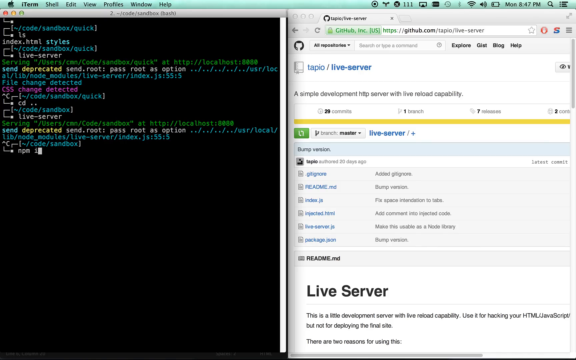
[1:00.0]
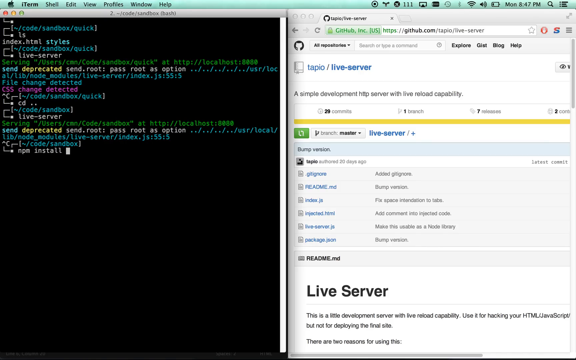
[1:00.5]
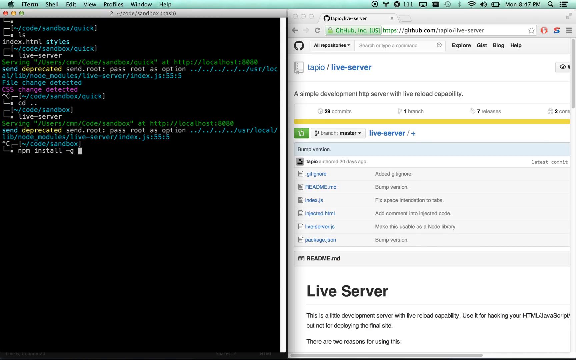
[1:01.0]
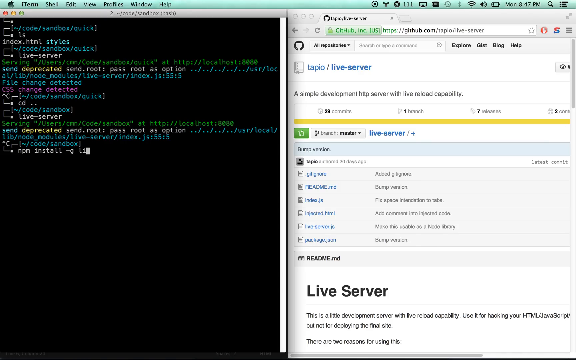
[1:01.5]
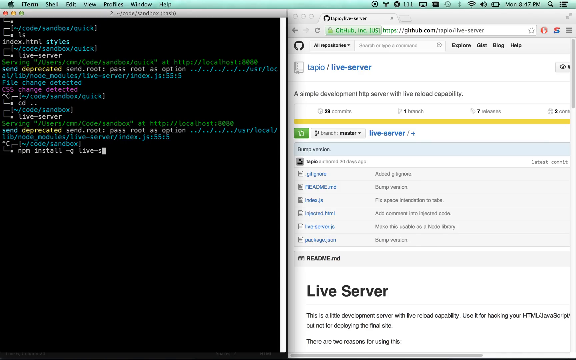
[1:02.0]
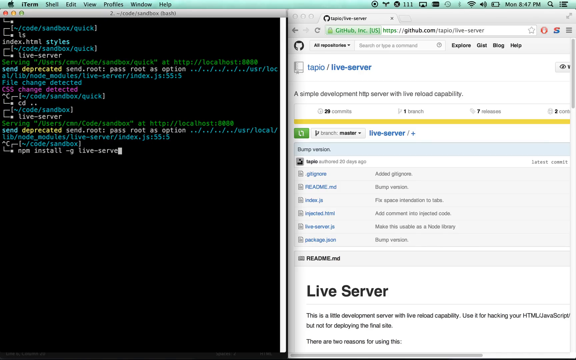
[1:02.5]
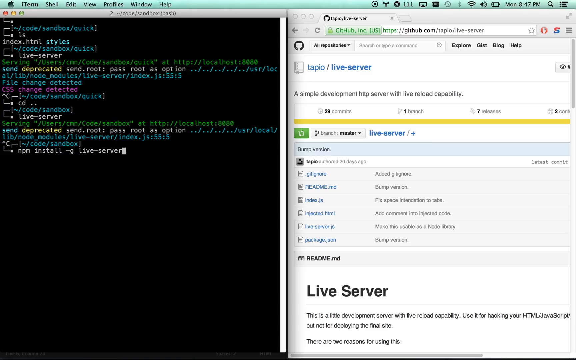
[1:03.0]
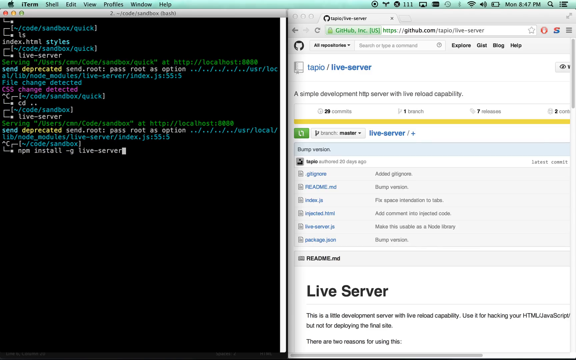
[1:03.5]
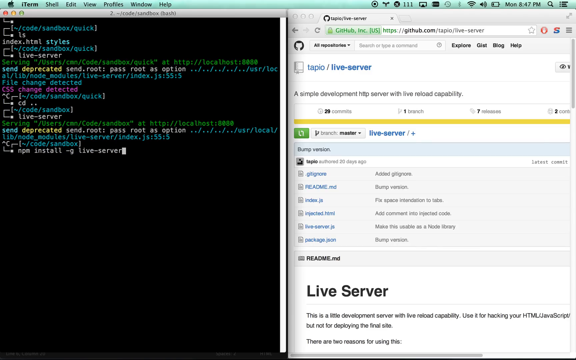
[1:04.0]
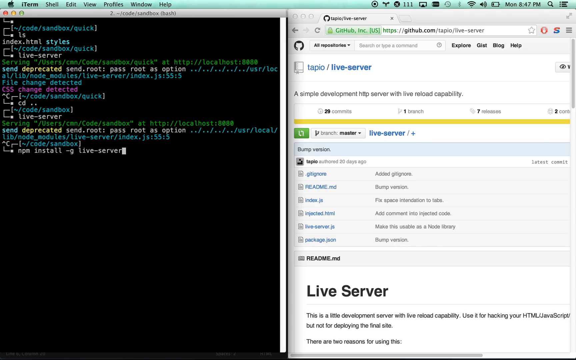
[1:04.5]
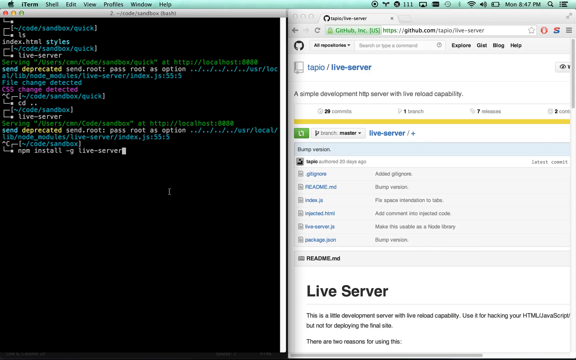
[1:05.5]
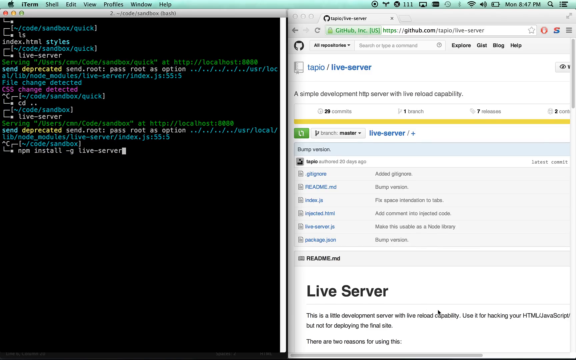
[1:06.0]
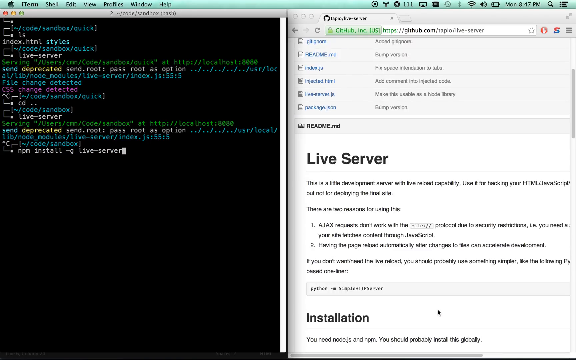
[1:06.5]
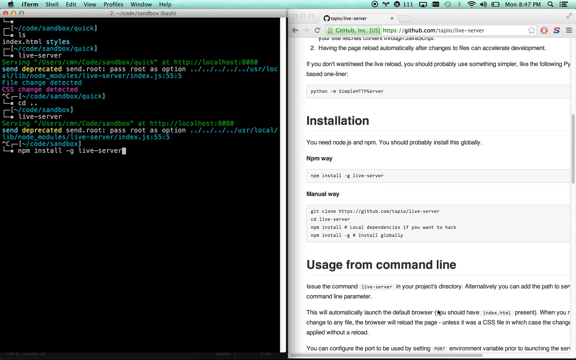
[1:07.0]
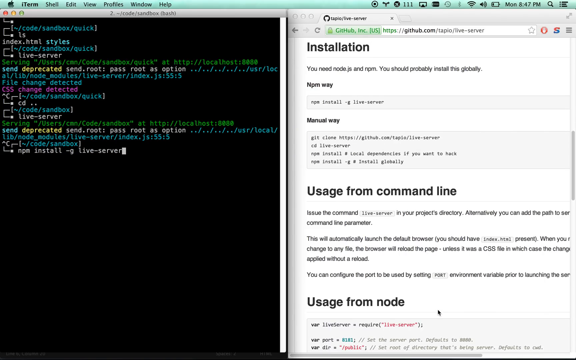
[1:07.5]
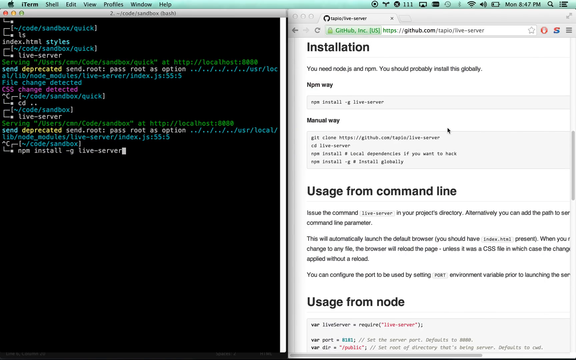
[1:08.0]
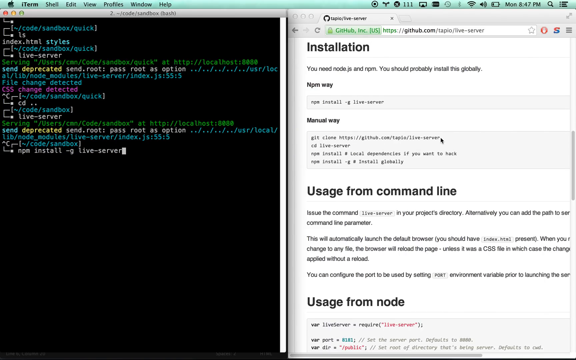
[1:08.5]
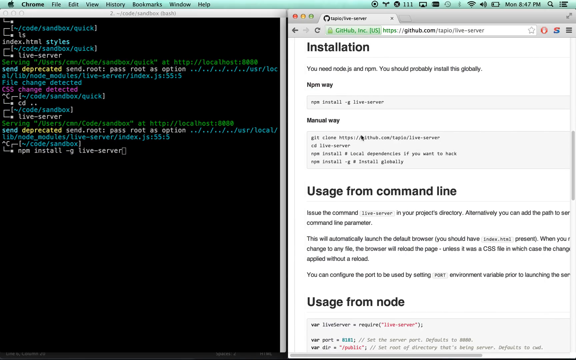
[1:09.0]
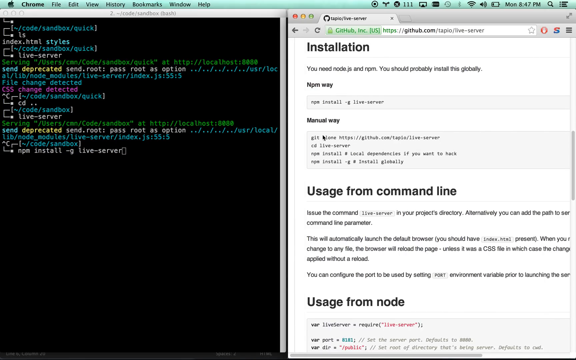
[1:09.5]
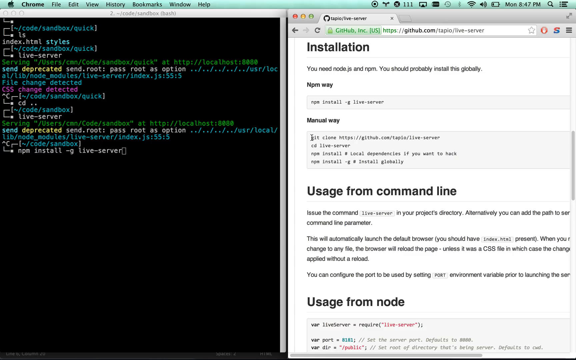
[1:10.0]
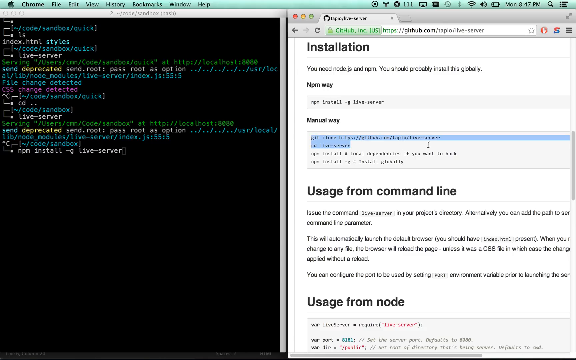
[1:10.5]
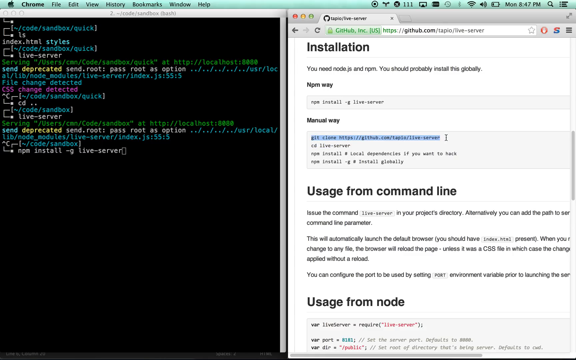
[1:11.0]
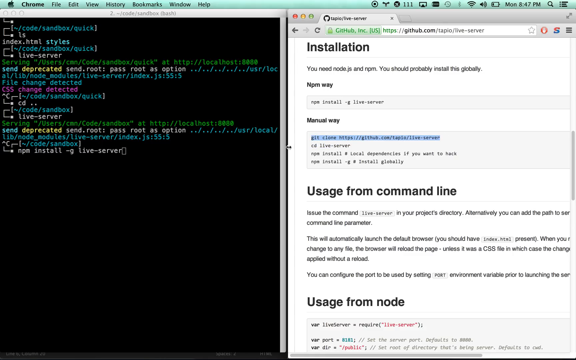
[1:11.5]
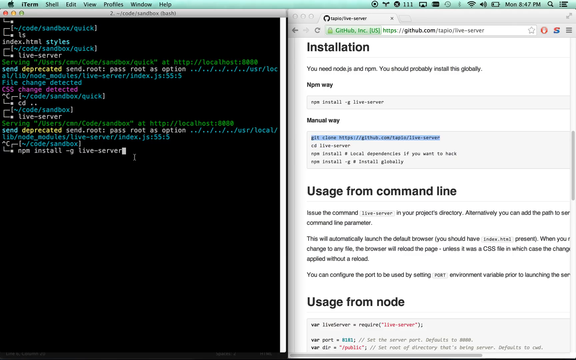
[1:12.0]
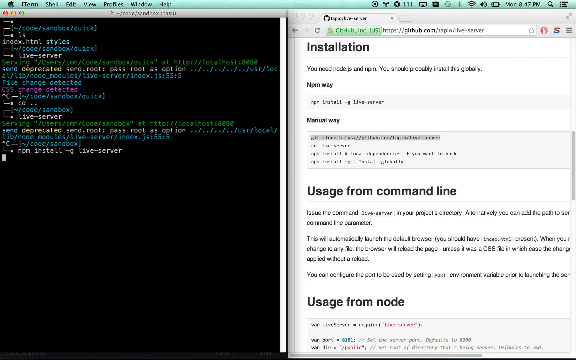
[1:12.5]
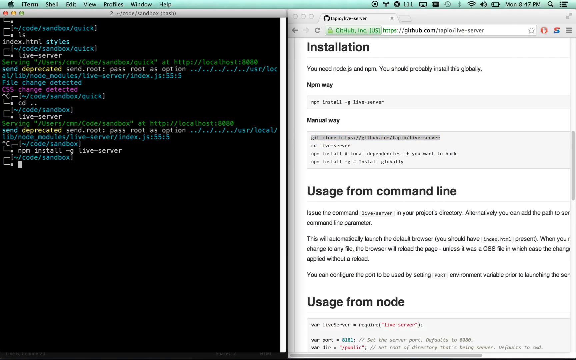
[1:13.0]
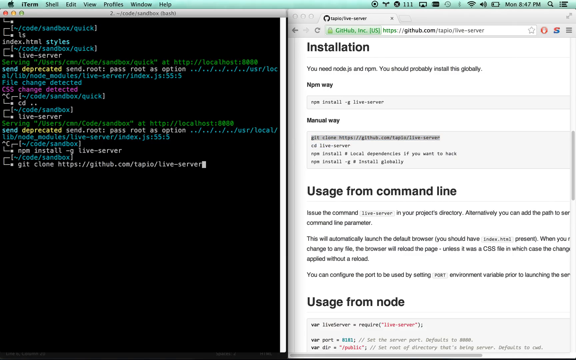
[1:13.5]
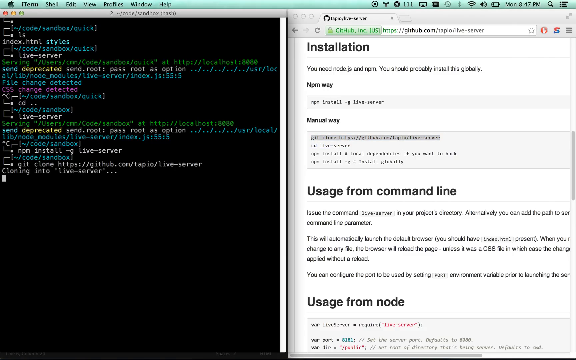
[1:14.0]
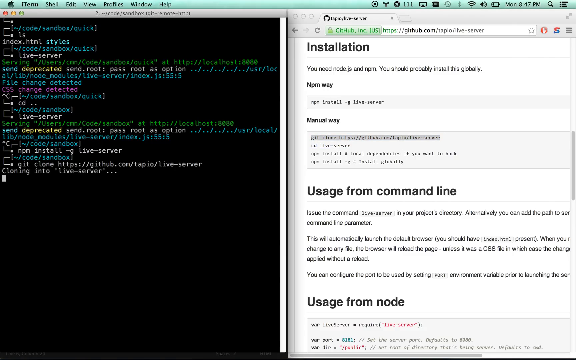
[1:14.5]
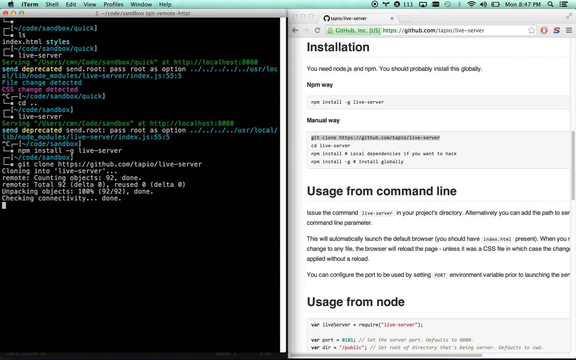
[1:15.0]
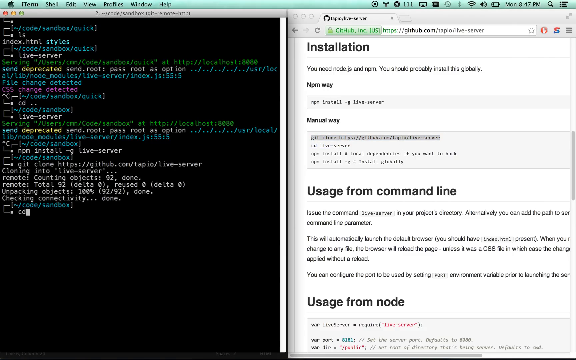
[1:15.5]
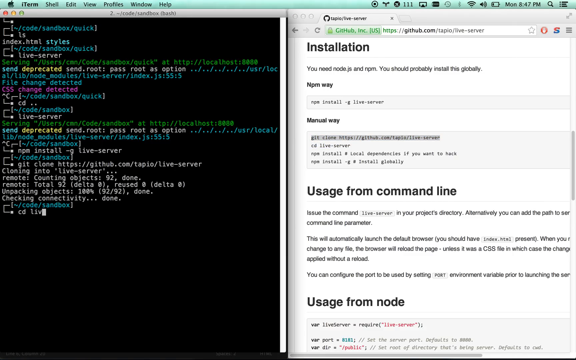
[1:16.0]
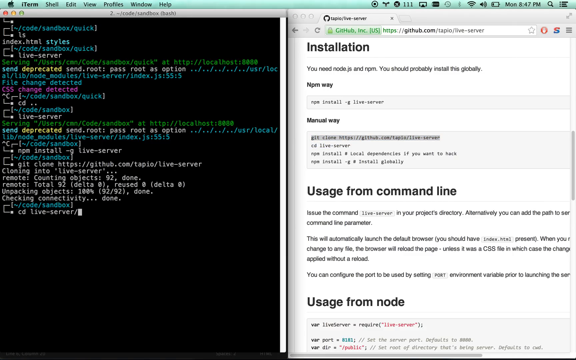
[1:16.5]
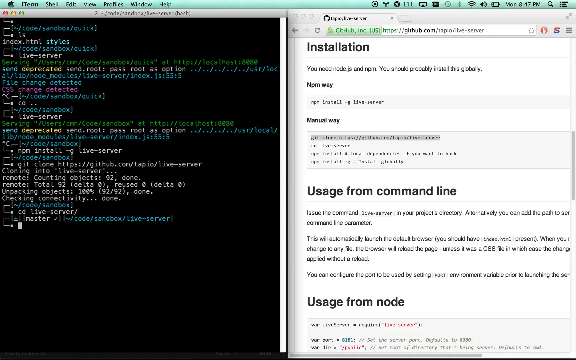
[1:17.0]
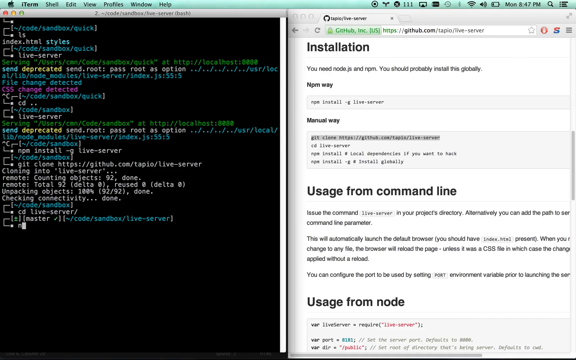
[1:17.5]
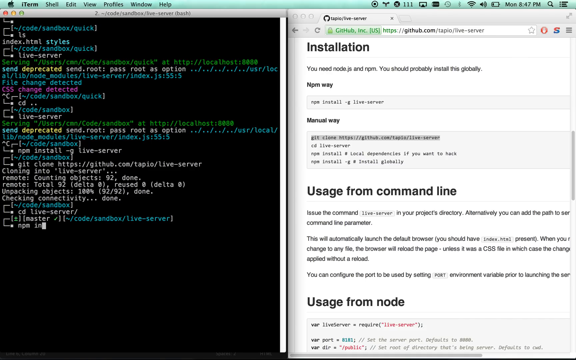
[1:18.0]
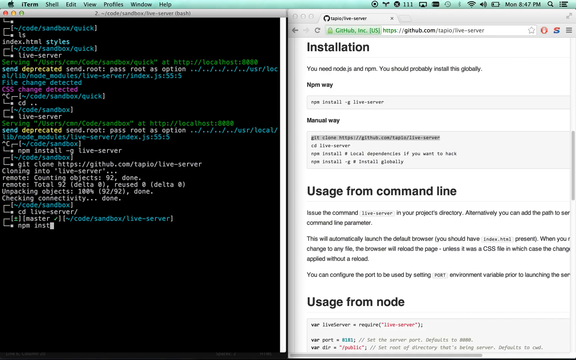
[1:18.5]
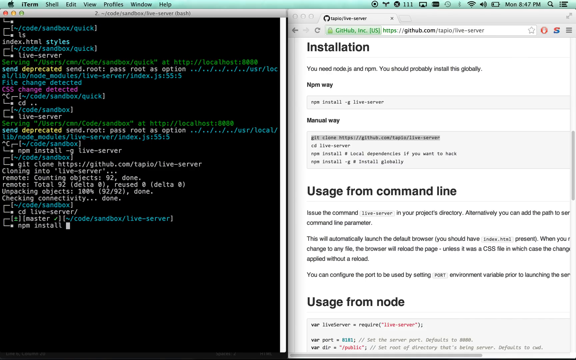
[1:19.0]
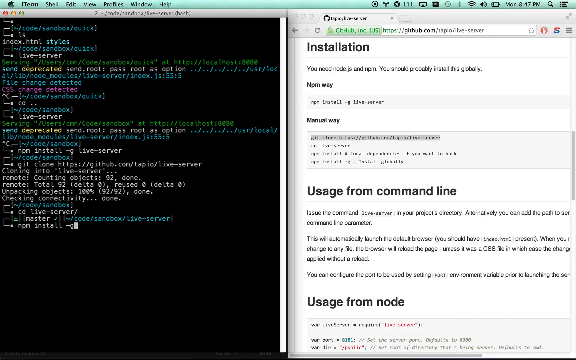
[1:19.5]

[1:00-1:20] The screen is still divided between the terminal and Google Chrome. Commands are typed into the terminal, and in Chrome on the right, where instructions for configuring and designing a server website are open, the page slides down to show further instructions. Part of the command text is copied from a section of the Chrome instructions that mainly says "installation" and "manual way". That section has four lines of command, and only one of them is copied into the terminal. The terminal then returns more output than it did for the earlier typed commands, seemingly as an attempt to configure the server website the manual way.